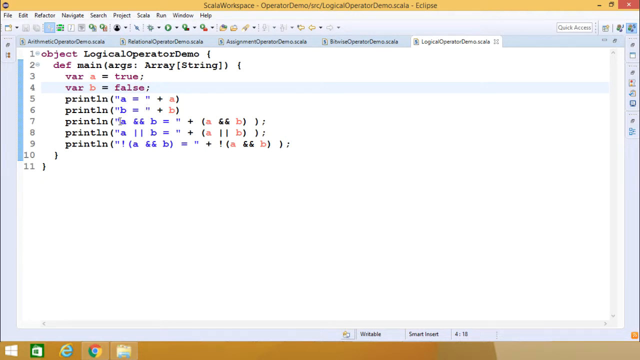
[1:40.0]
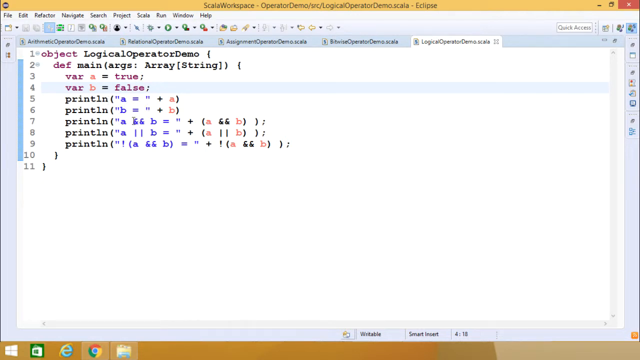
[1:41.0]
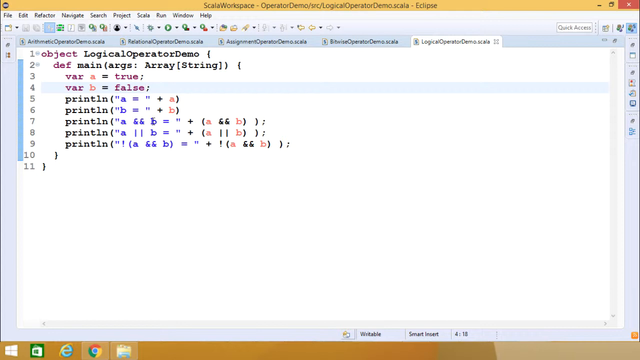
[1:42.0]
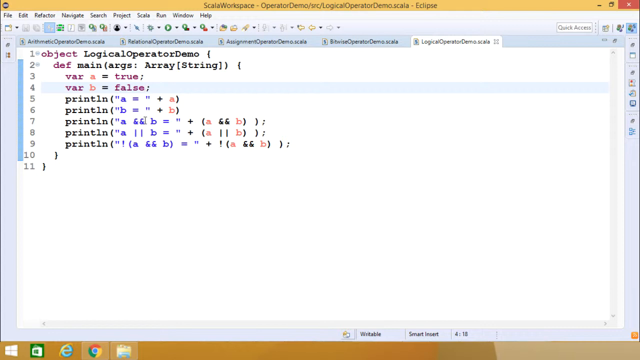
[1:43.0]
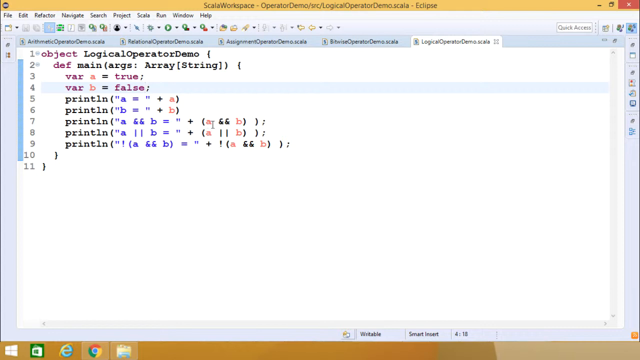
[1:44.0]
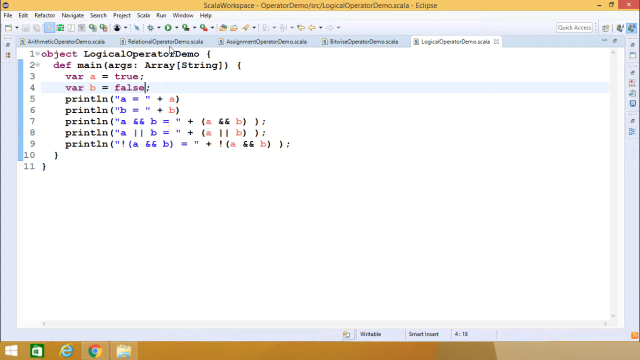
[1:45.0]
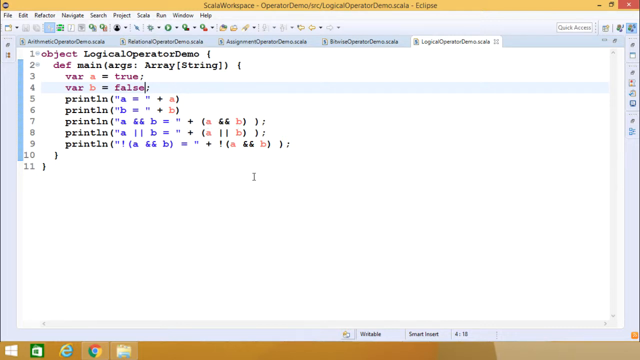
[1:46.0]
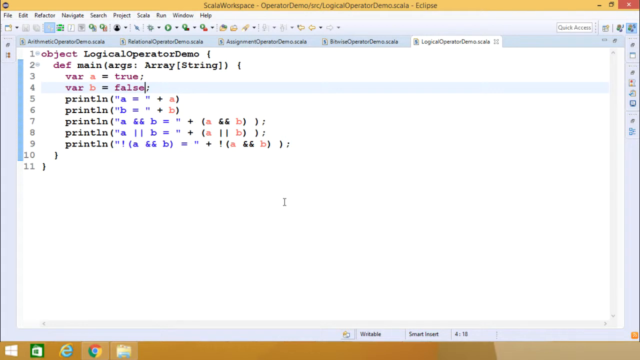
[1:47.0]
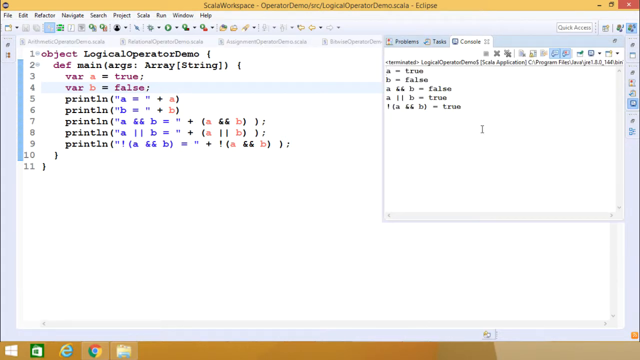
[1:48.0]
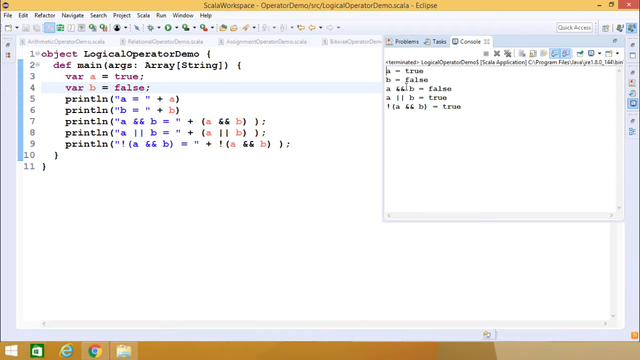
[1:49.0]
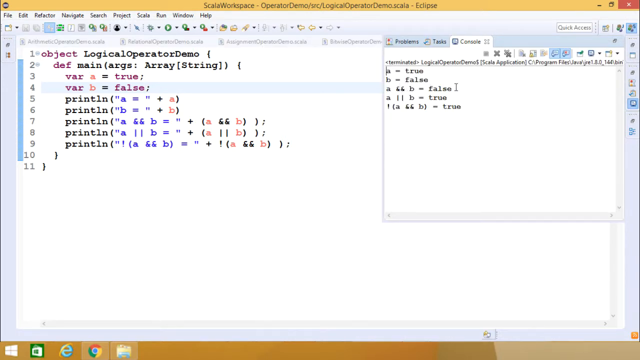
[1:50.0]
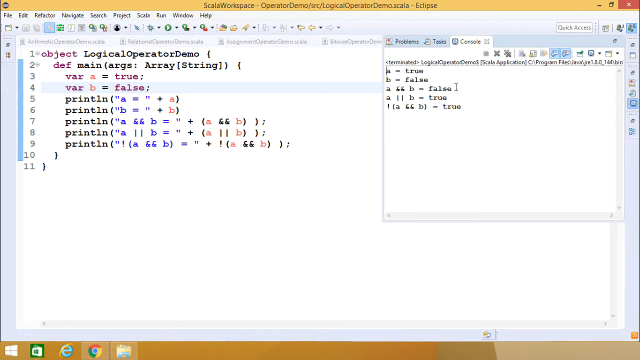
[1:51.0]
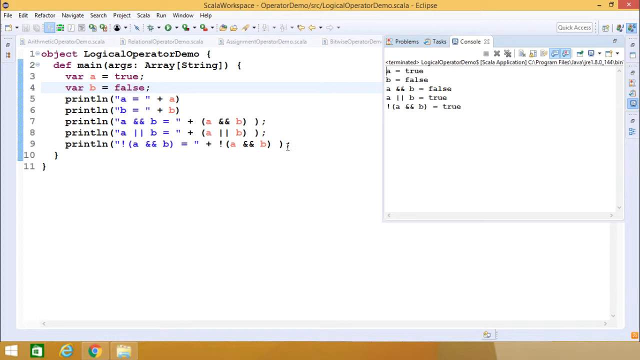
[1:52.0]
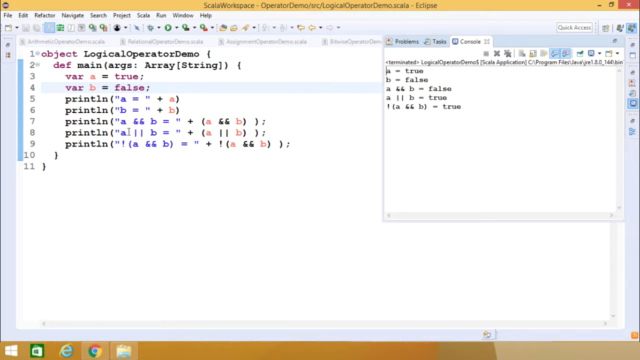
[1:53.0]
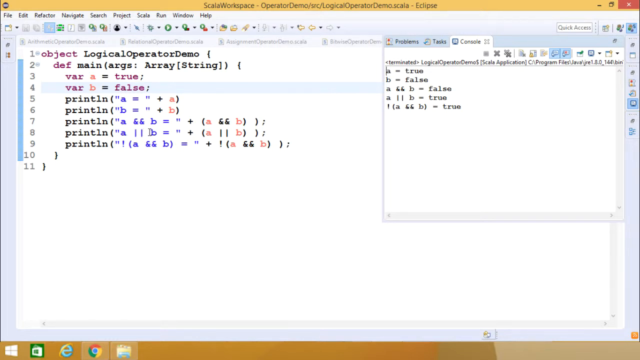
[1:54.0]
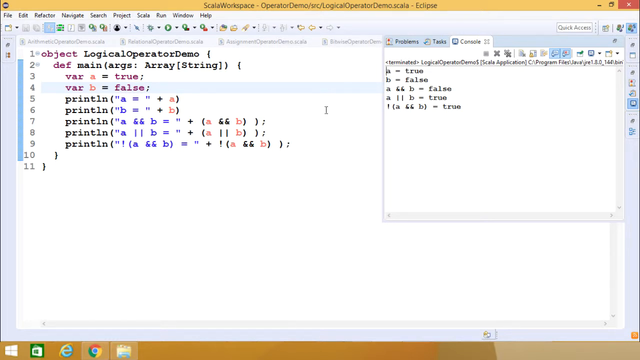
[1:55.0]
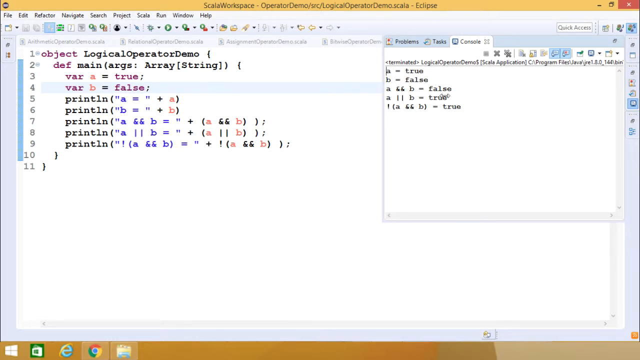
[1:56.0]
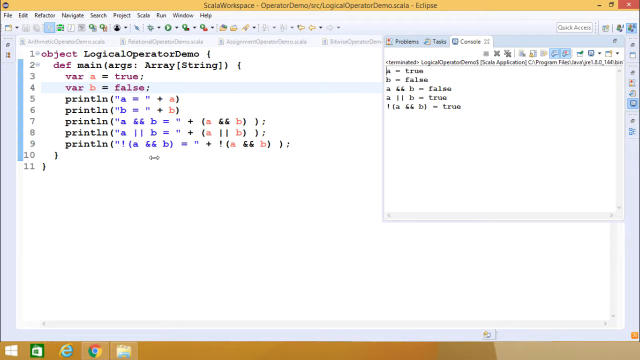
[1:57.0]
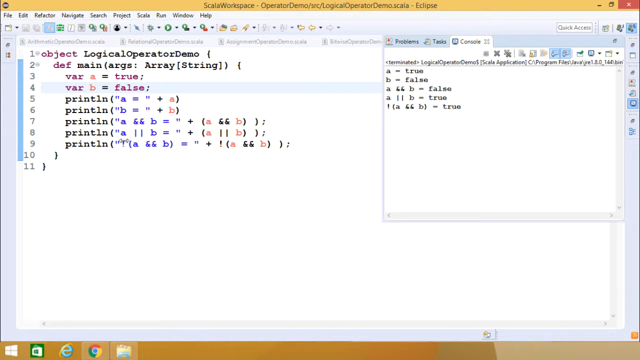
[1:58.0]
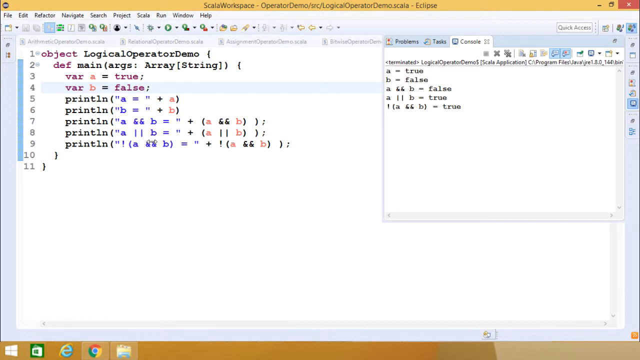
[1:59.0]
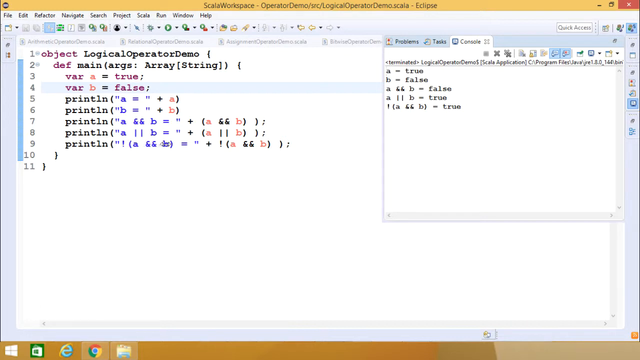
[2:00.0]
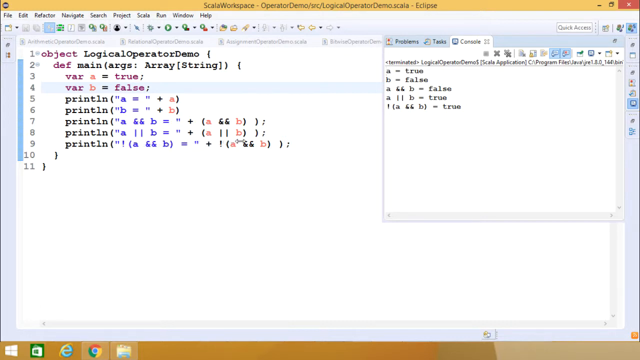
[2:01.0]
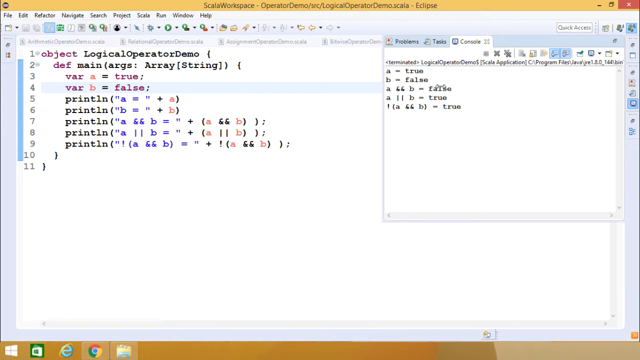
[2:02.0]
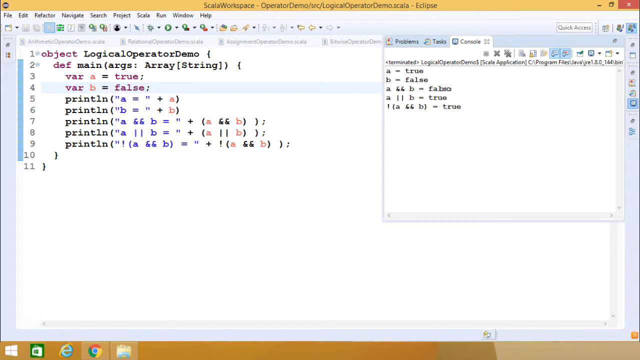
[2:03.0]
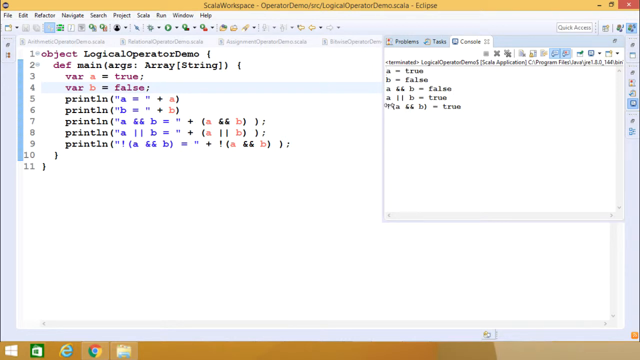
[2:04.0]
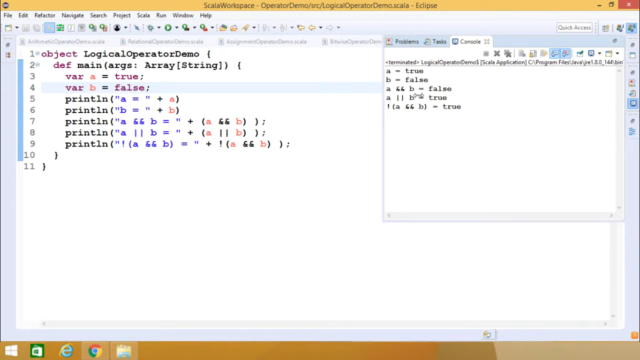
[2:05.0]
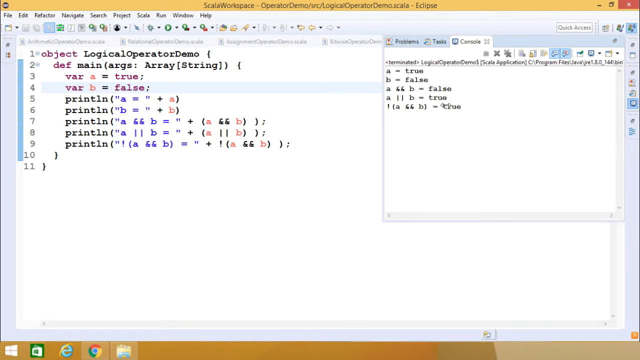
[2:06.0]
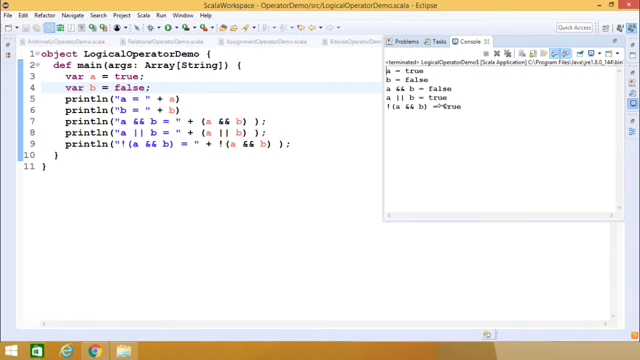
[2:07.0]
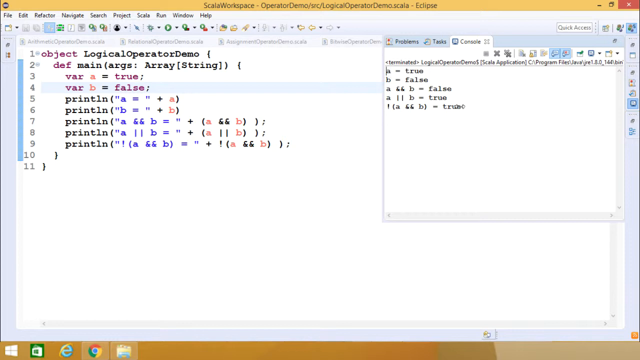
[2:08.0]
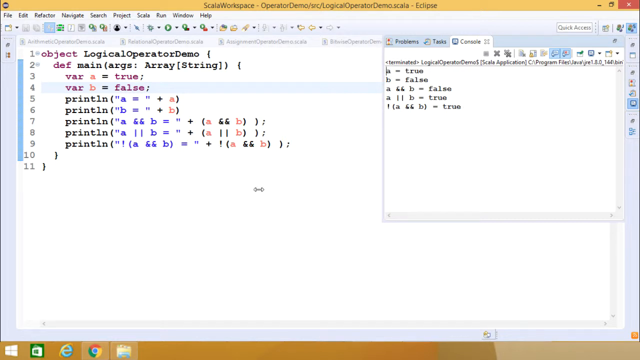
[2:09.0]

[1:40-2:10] The Scala workspace is shown, with a text prompt that can be typed into where the code goes. Code is already present: the first line reads object logical operator demo, the second line has def main with its arguments, followed by var a equals true and var b equals false. Lines print a, which is true, and b, which is false.